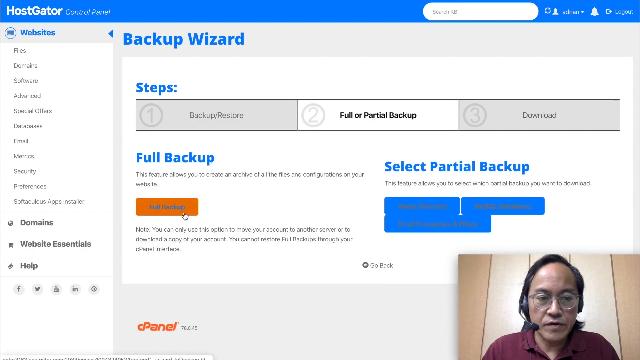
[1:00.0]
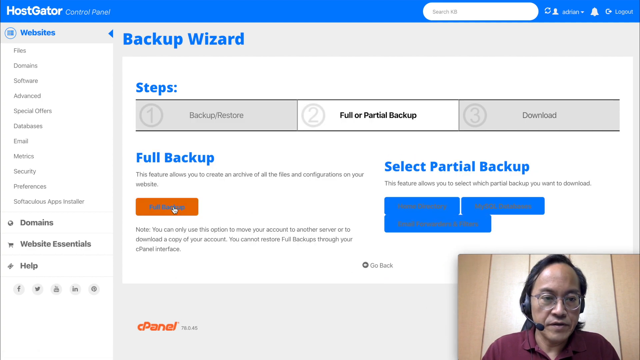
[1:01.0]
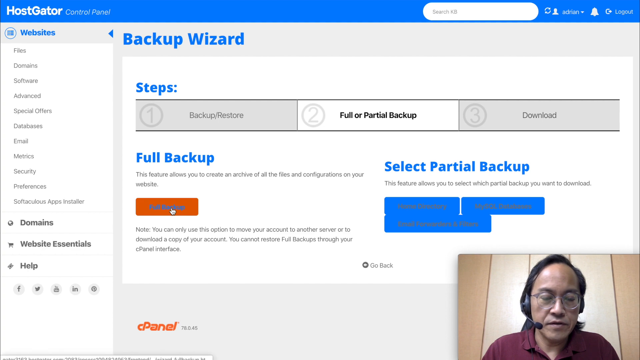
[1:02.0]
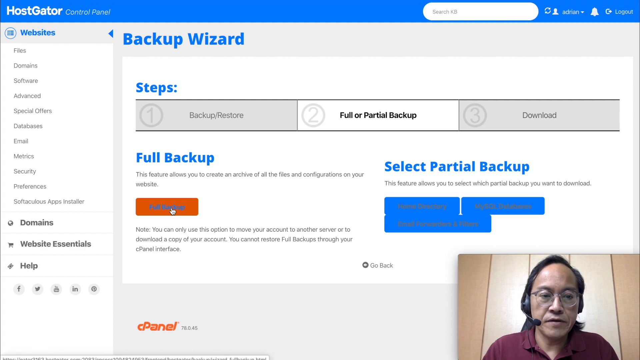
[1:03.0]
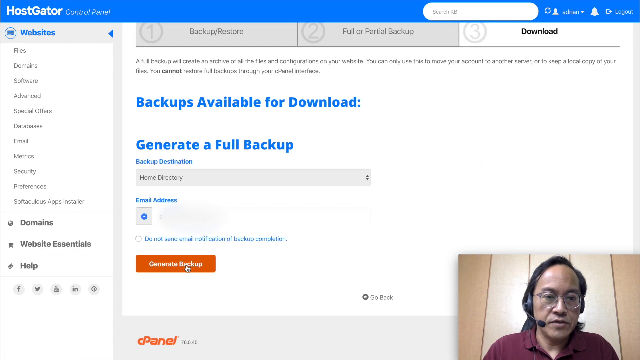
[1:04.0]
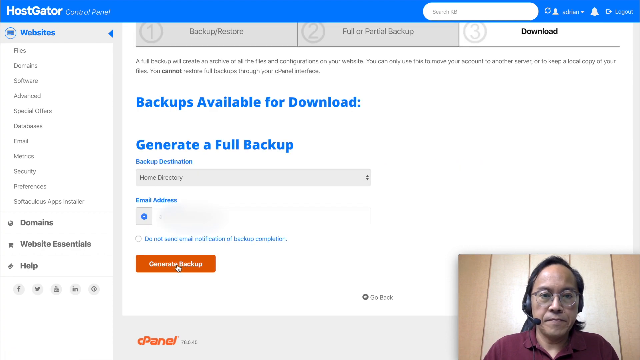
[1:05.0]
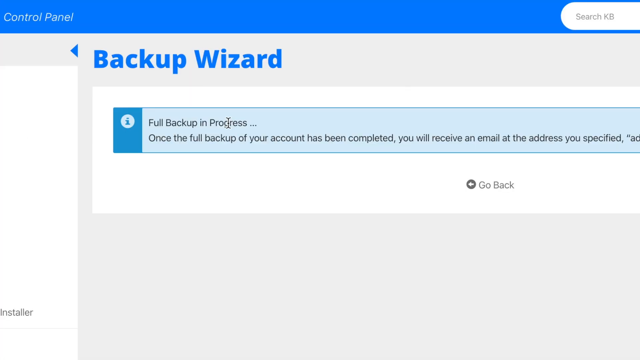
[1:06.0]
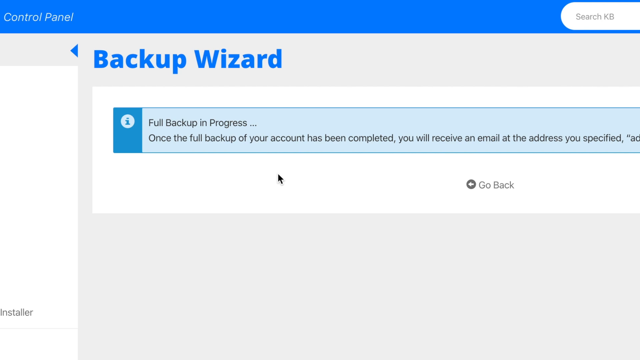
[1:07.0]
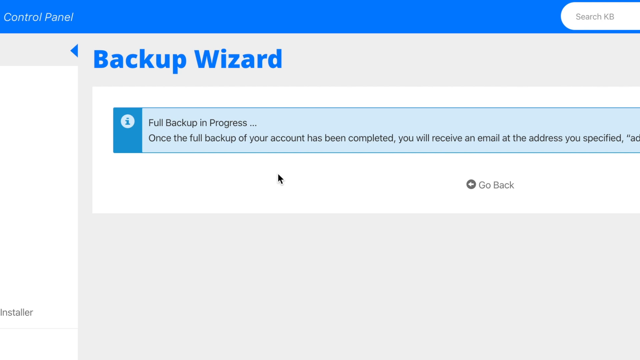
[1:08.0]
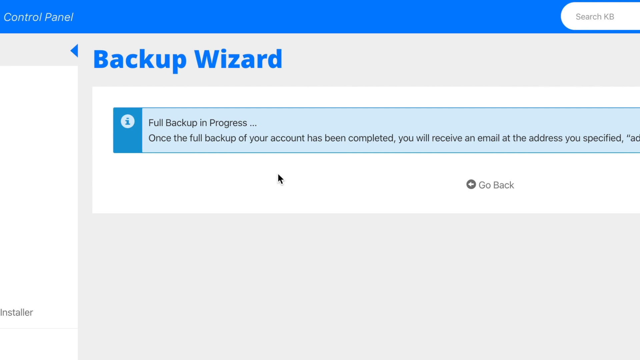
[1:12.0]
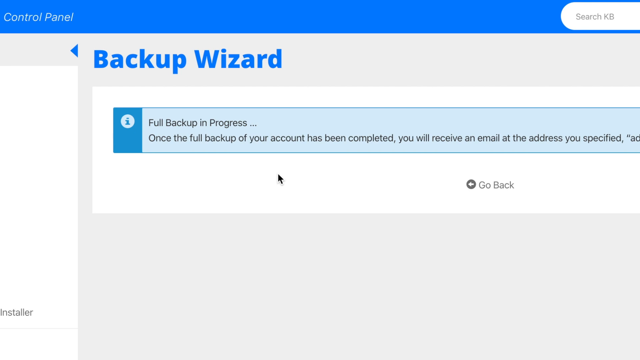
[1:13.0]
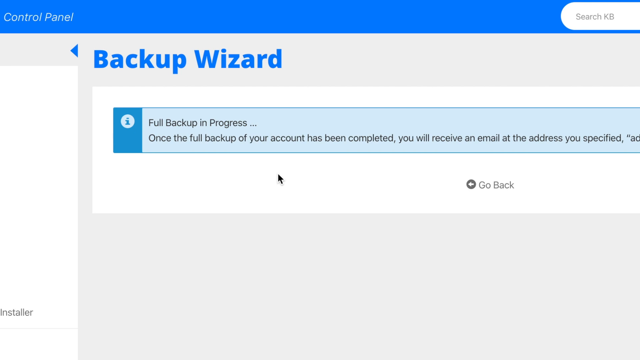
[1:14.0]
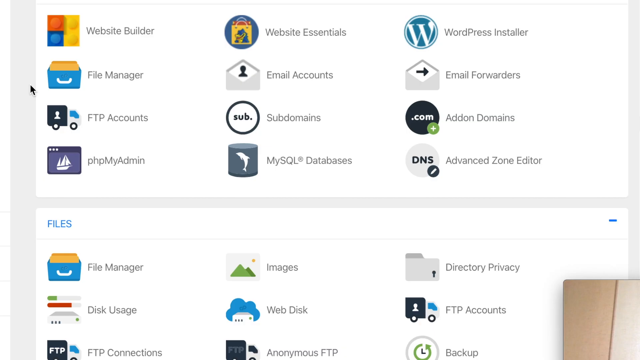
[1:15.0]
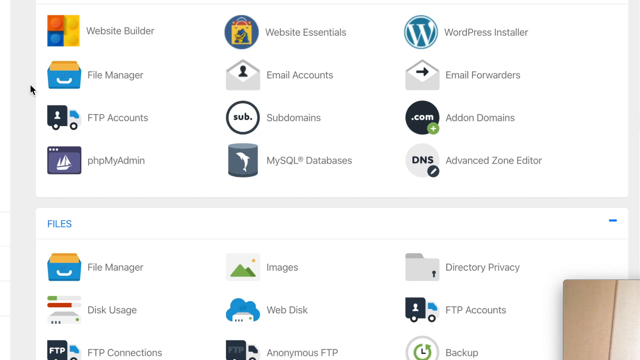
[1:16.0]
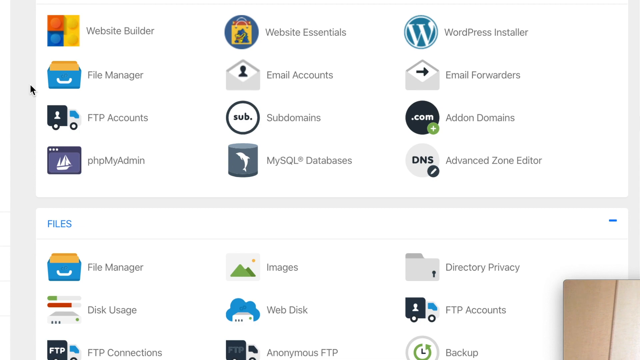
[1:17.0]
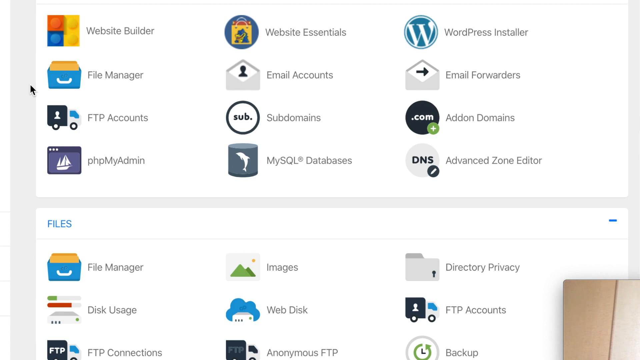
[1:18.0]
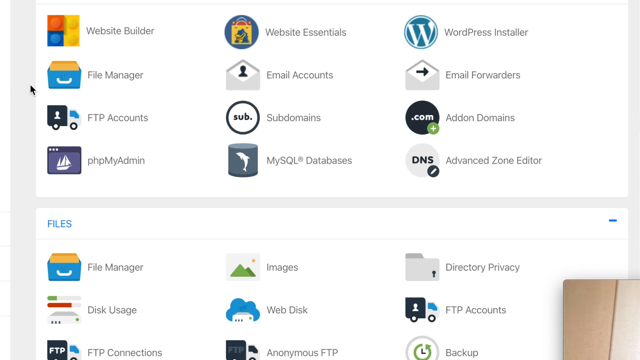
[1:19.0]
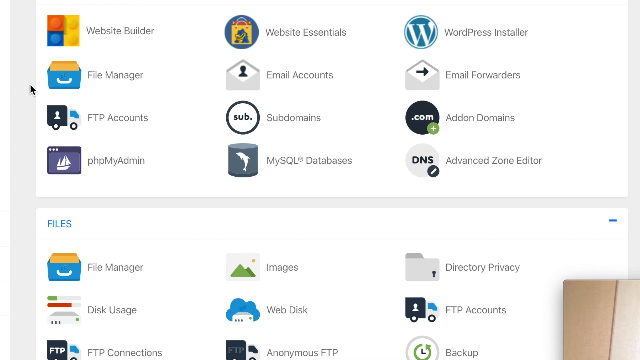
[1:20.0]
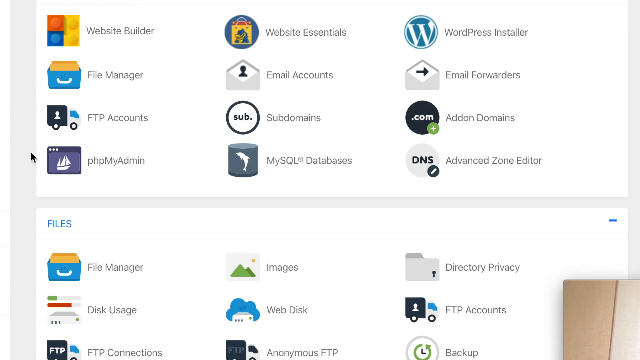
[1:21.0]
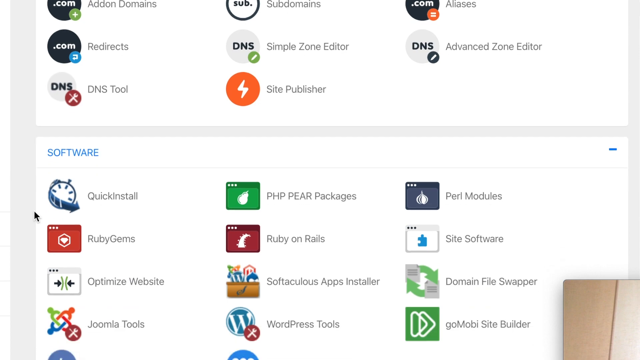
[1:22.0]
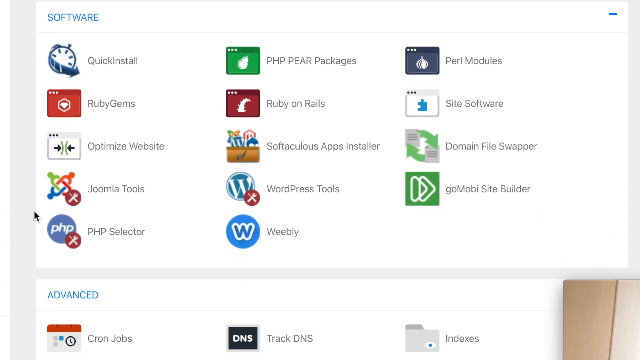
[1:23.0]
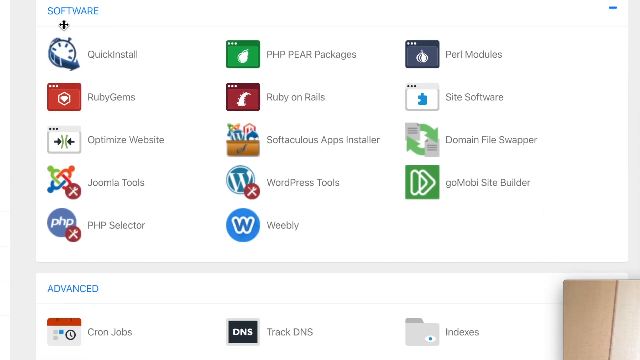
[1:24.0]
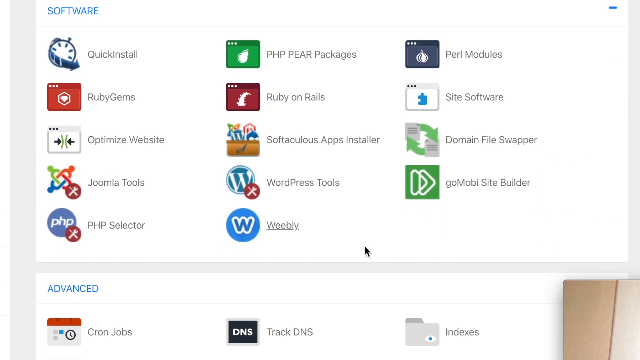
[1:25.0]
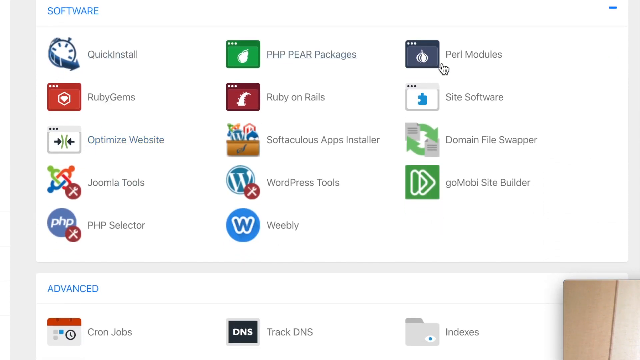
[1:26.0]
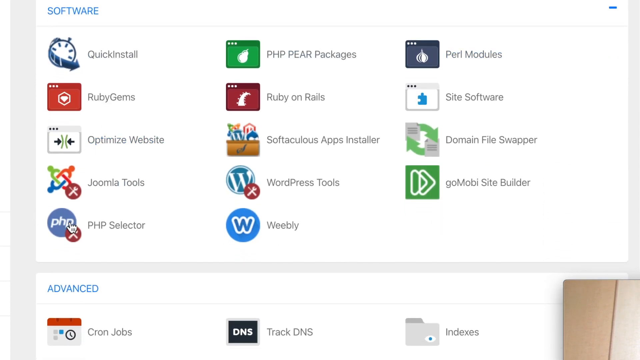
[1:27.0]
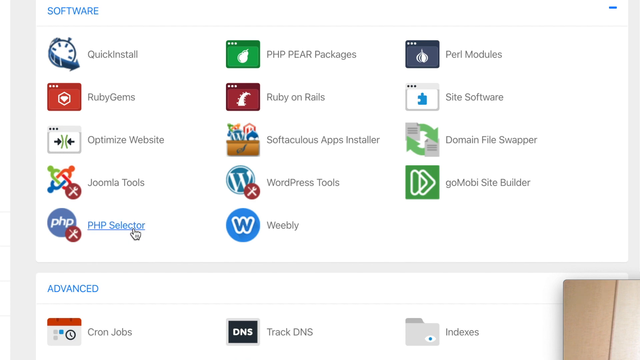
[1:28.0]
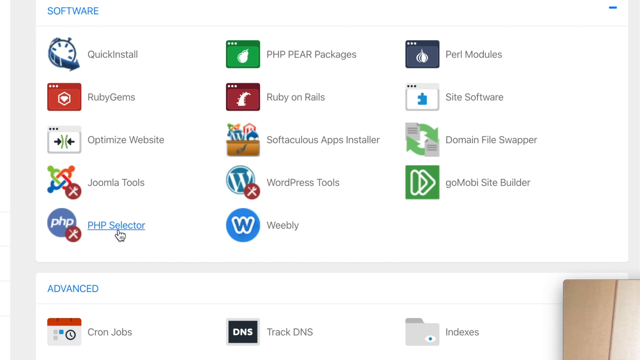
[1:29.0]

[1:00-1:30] A man at the bottom of the screen on a webcam wears a headset, glasses and a maroon shirt. He is on the HostGator website, where the screen reads "control panel" and "backup wizard," with three steps: "backup, restore," "full or partial backup" and "download." After the backup button is clicked, the page shows "full backup" with "This feature allows you to create an archive of all files and configurations on your website," and a "partial backup" option with "This feature allows you to select which partial backup you want to download." He clicks full backup. The page then shows "backups available for download," "generate a full backup," "backup destination," "email address," "generate backup," then "full backup in progress" and "Once the full backup of your account has been completed, you'll receive an email at the address you specified." He waits, then moves to another page labeled "files" and clicks "PHP selector."